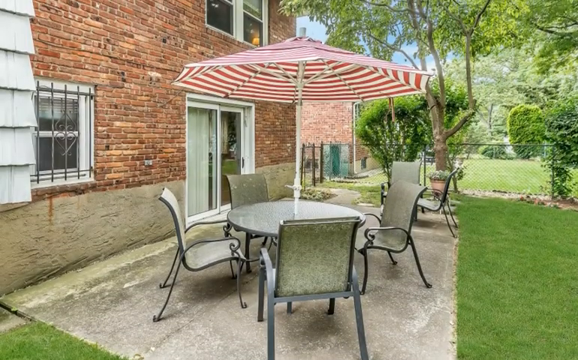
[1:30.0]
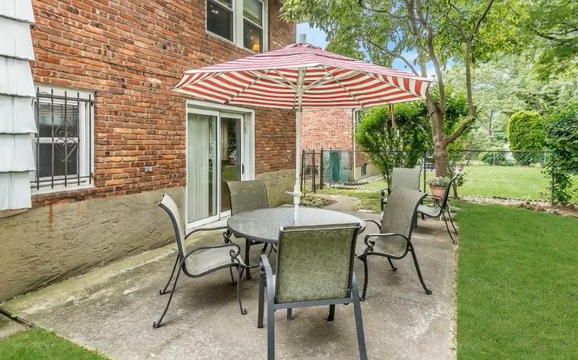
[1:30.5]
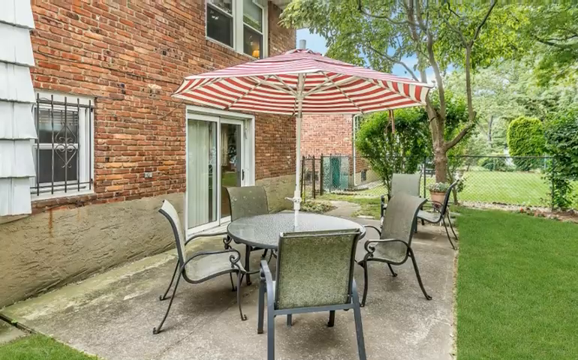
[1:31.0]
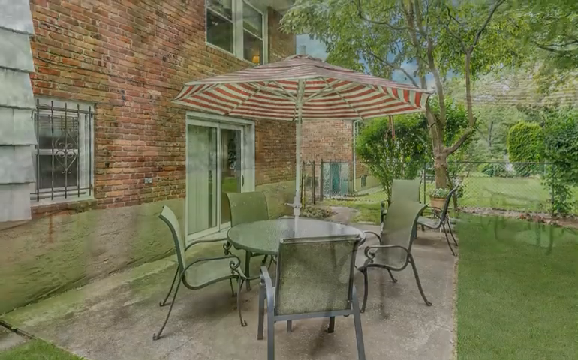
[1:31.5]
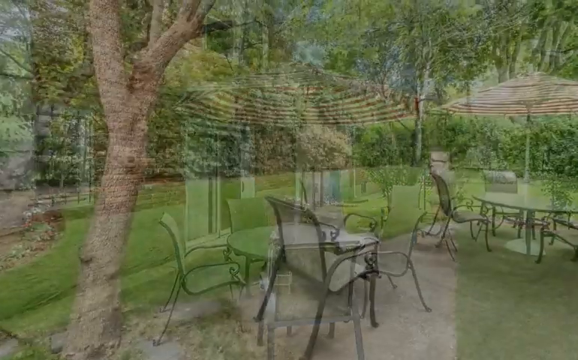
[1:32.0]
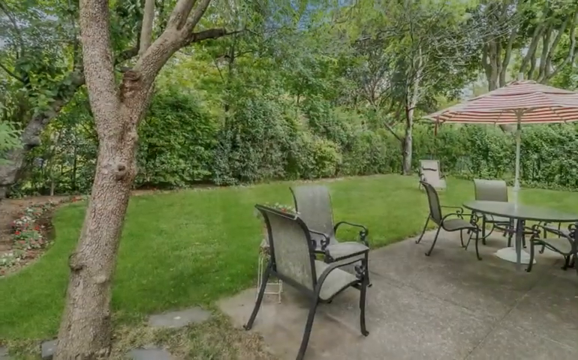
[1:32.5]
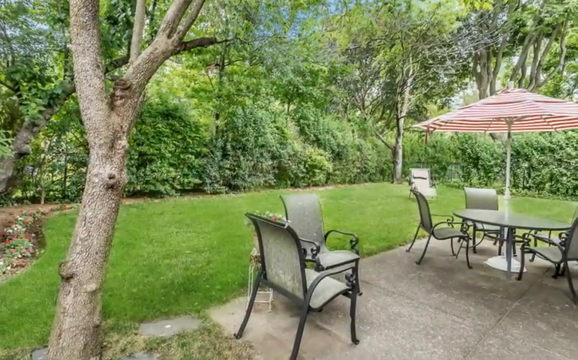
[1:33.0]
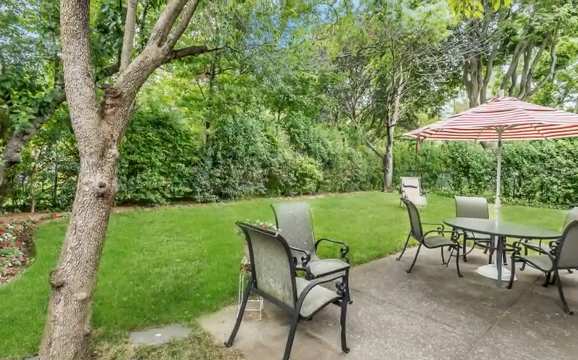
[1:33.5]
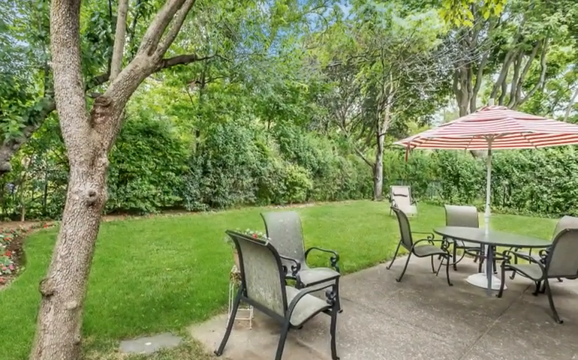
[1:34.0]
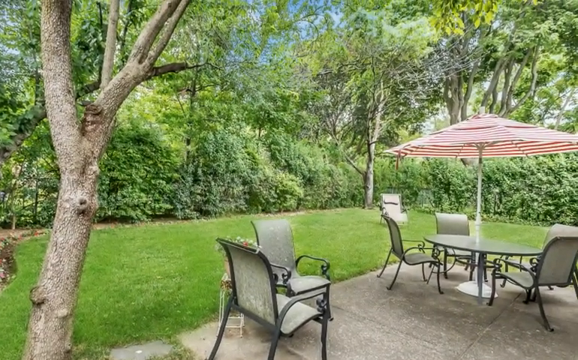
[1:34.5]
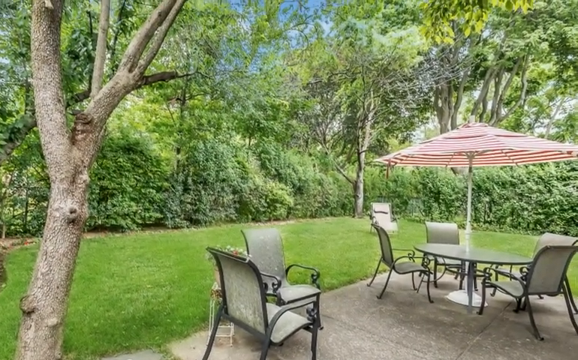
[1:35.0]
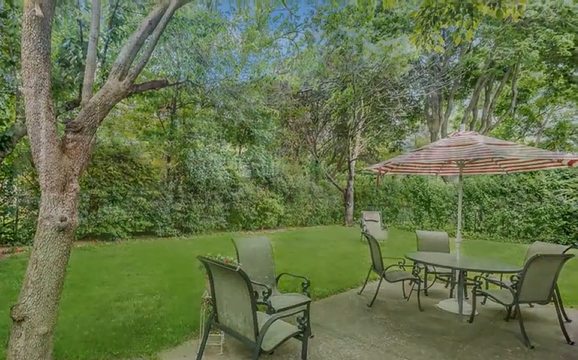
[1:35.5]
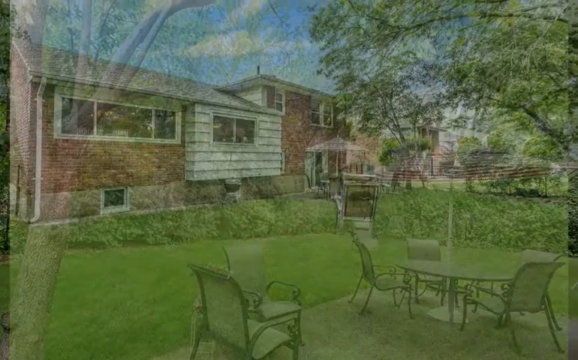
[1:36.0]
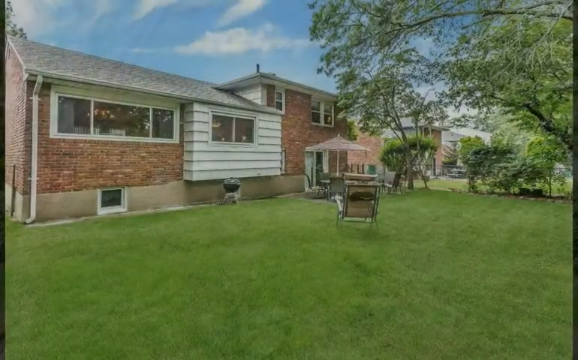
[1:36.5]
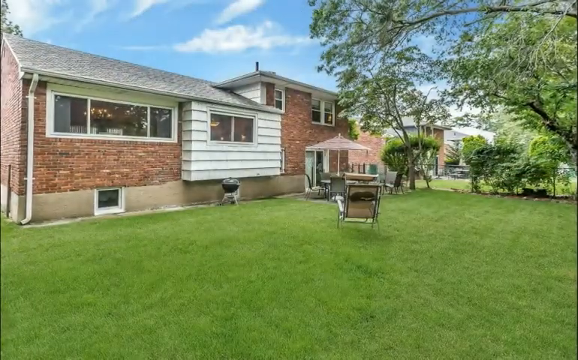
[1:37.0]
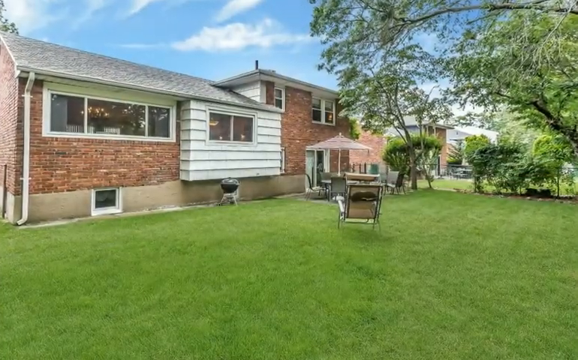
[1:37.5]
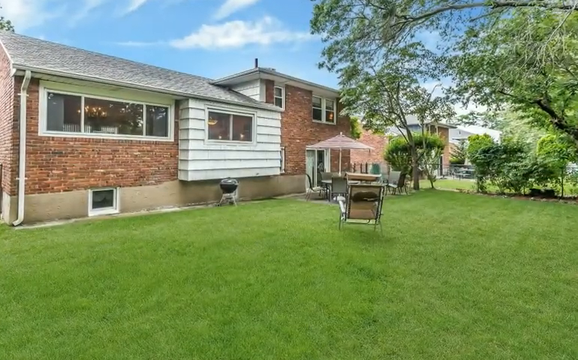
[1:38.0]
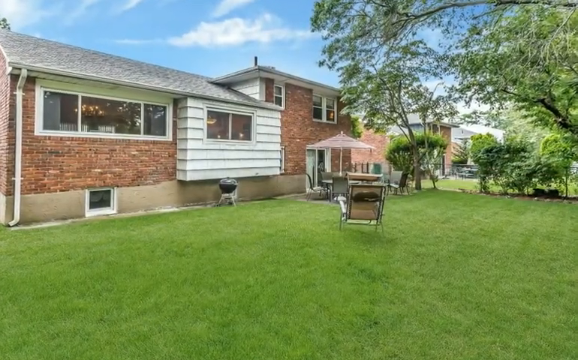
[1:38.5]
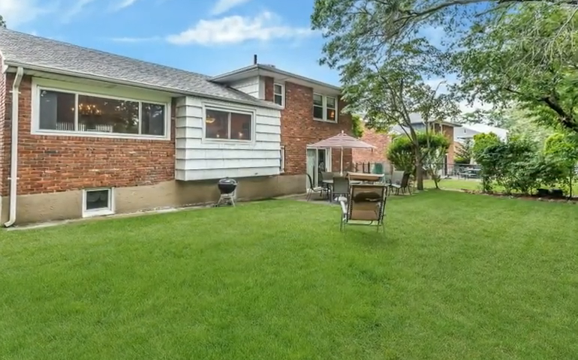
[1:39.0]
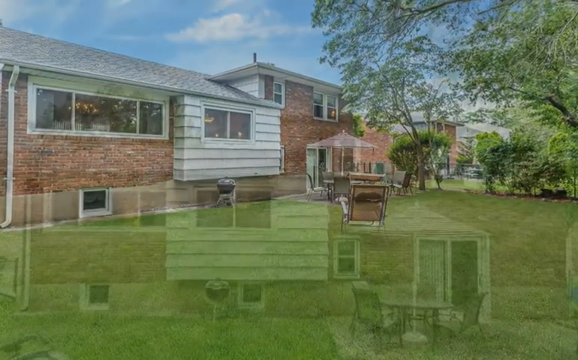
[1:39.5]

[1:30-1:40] The exterior of the house is shown again, this time in the backyard. There is a small rectangular patio made of a rectangular concrete slab. Wrought iron bars are over the window on the first floor of the house. A table that appears to be round and gray has a red and white striped umbrella in its center, on a white pole attached to the table. Four gray chairs are around the table, and two additional chairs are sitting off to the side on the patio. Near these chairs is a terracotta planter with vibrantly green flowers growing in it, on a black wrought iron stand.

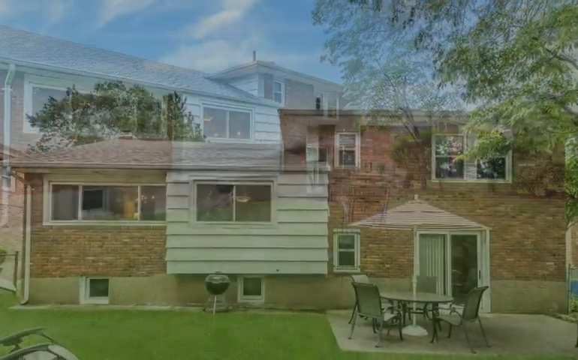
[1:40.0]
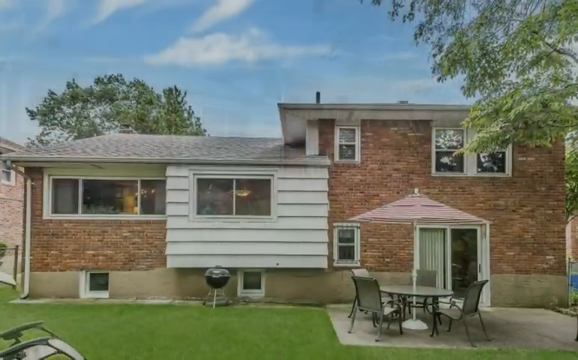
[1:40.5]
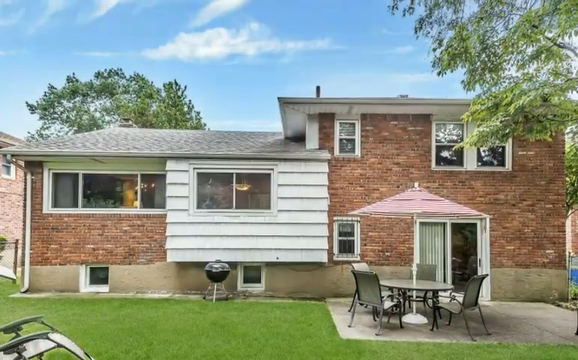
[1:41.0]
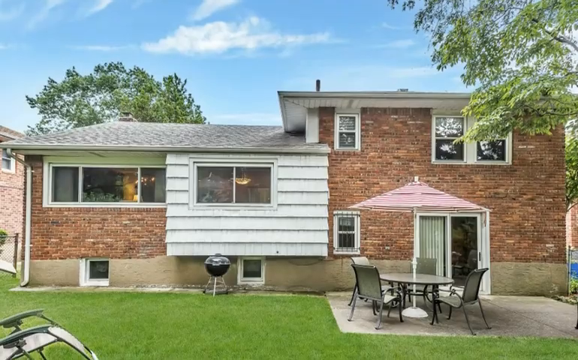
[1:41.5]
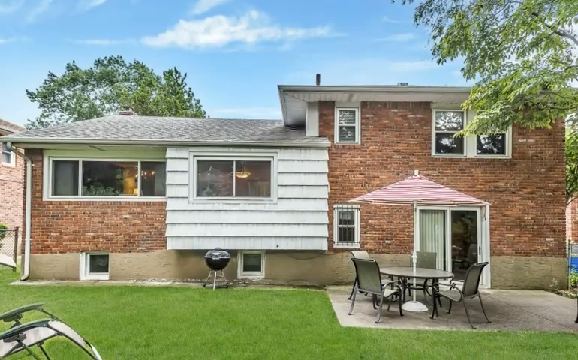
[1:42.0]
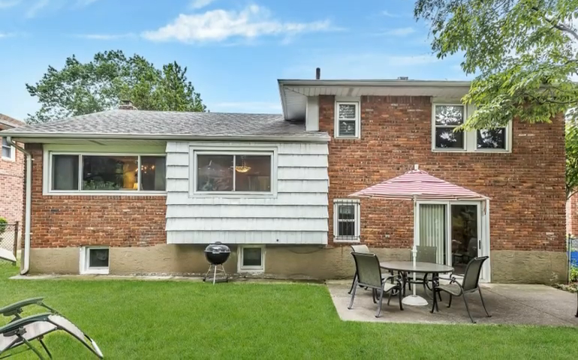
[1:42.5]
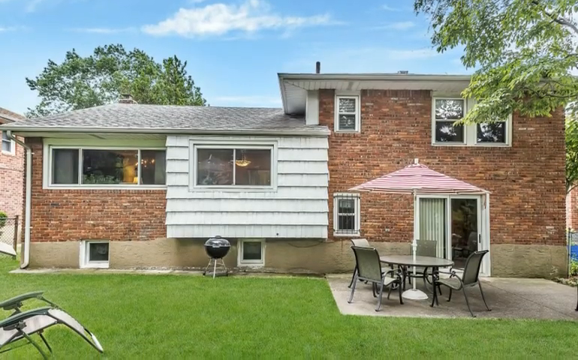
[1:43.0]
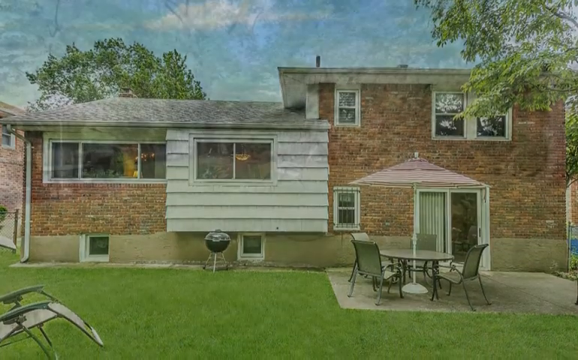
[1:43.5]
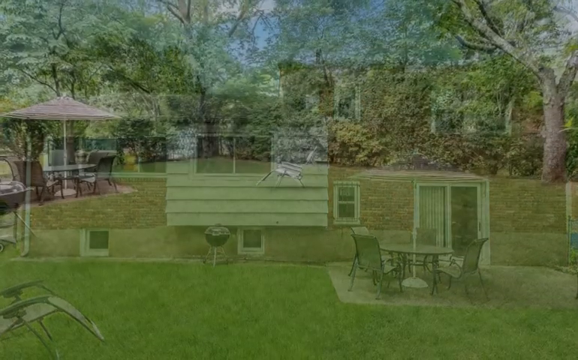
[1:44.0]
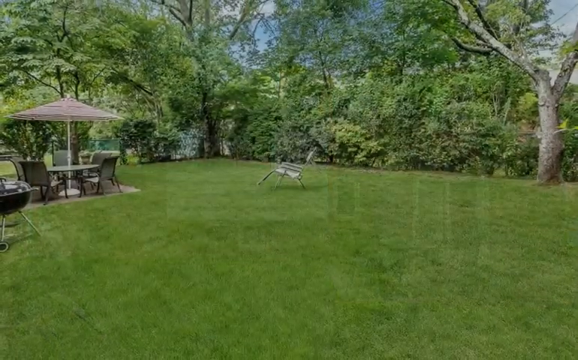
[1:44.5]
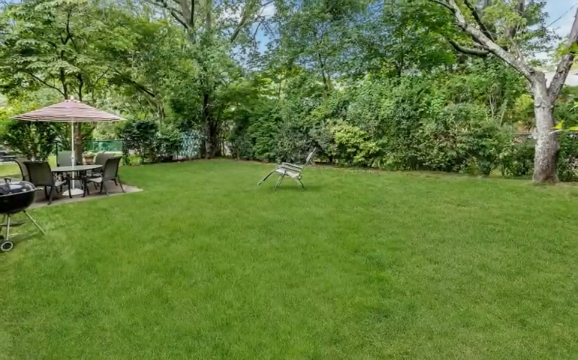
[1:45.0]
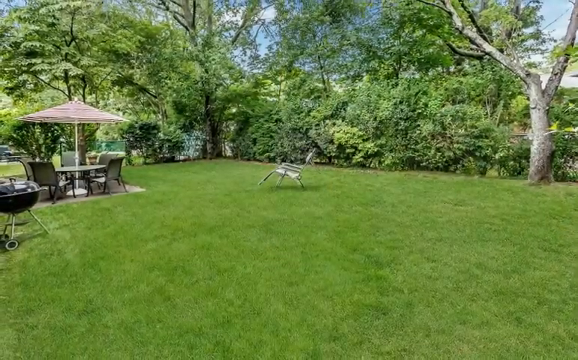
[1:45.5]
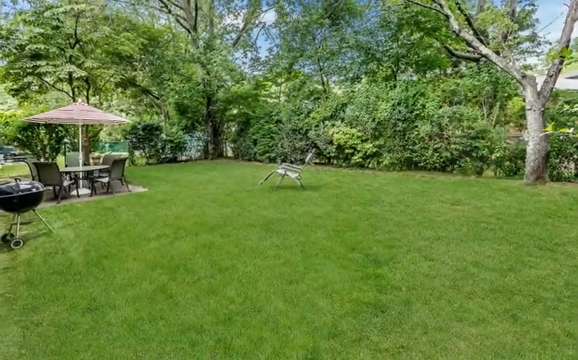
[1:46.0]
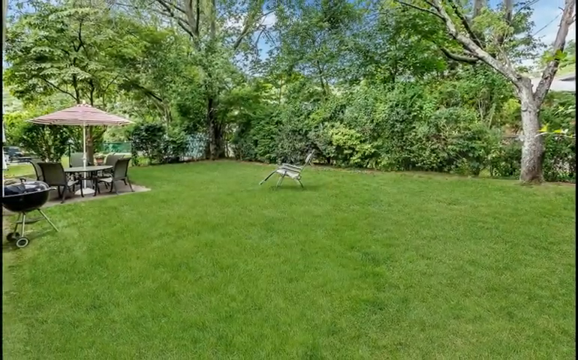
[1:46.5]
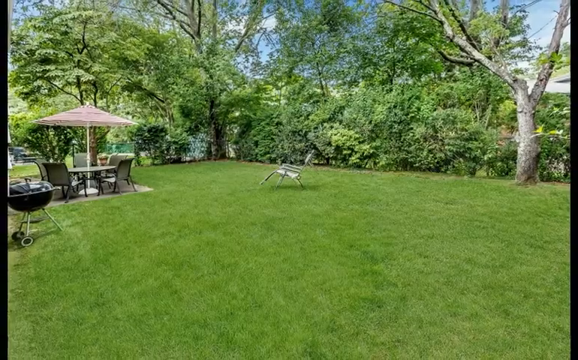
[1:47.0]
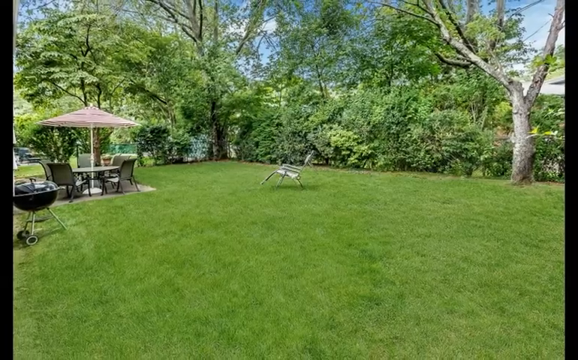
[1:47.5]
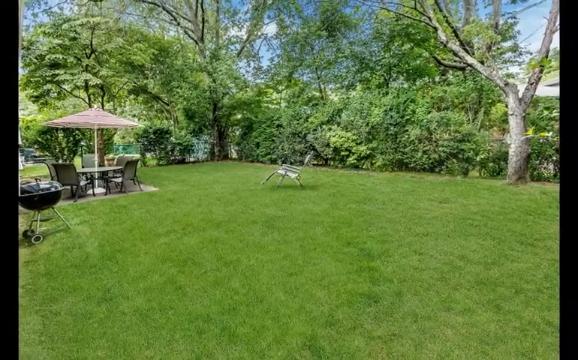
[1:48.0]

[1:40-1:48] A different view of the backyard shows the full back side of the home. Red, terracotta, burgundy, and white brick covers the back of the home, and part of the home is painted a misty gray. The roof is gray, and green grass is growing in the backyard. A small round barbecue grill, silver at the top and black at the bottom, stands on three legs. There are six windows on the back of the house. The sky is bright sky blue with a few fluffy white clouds. It appears to be summertime or late spring, as it looks warm and everything looks alive and growing.